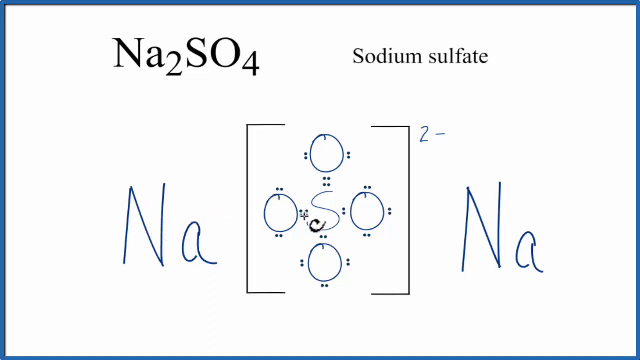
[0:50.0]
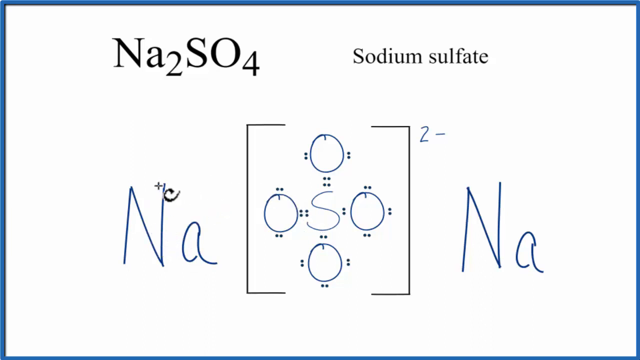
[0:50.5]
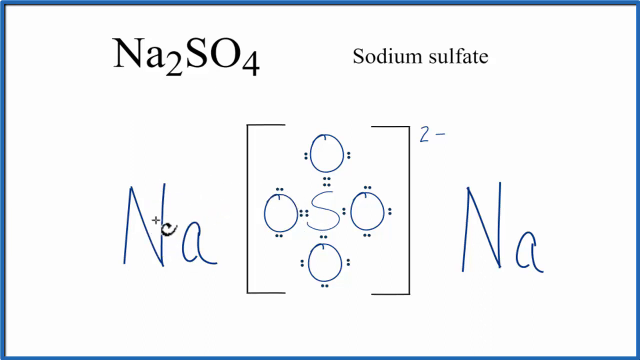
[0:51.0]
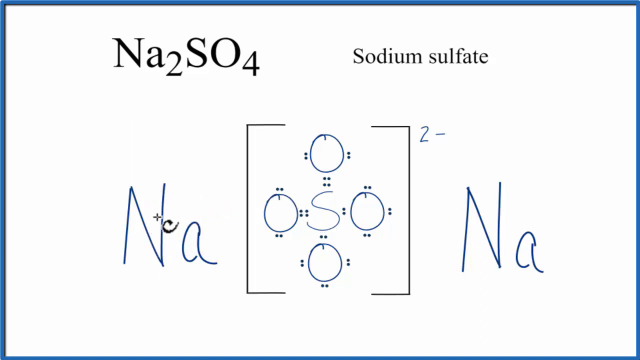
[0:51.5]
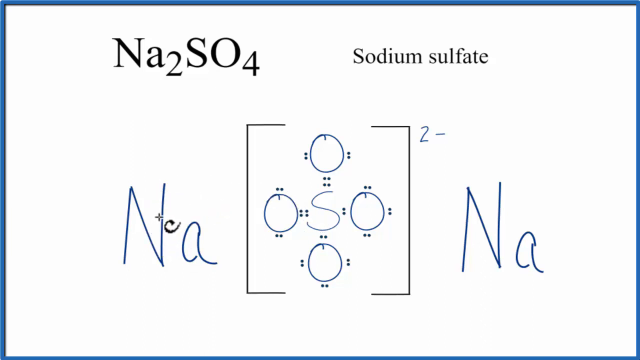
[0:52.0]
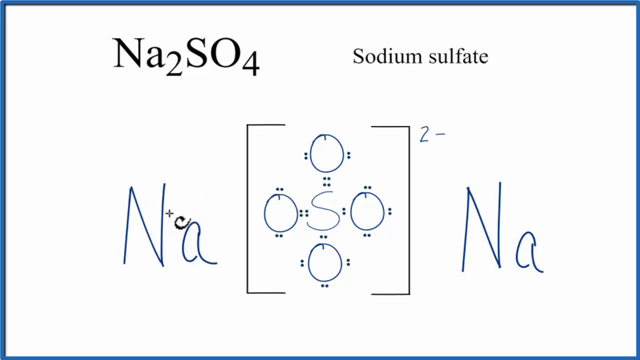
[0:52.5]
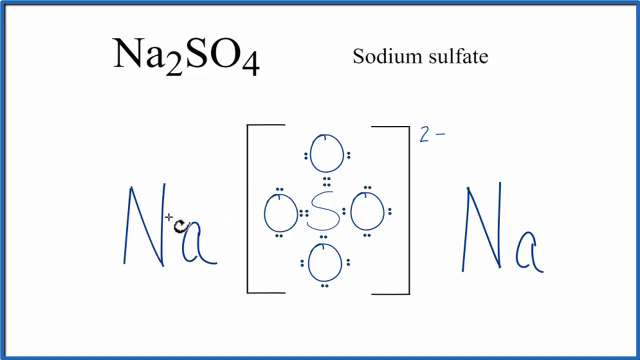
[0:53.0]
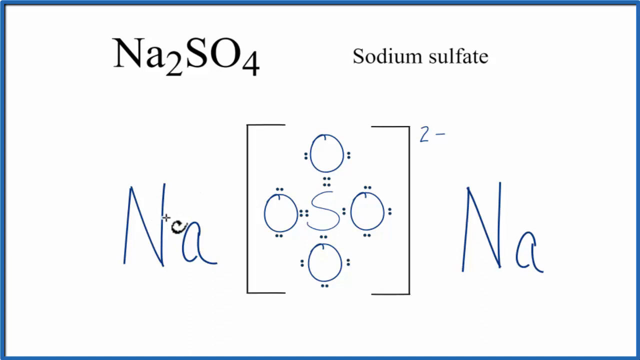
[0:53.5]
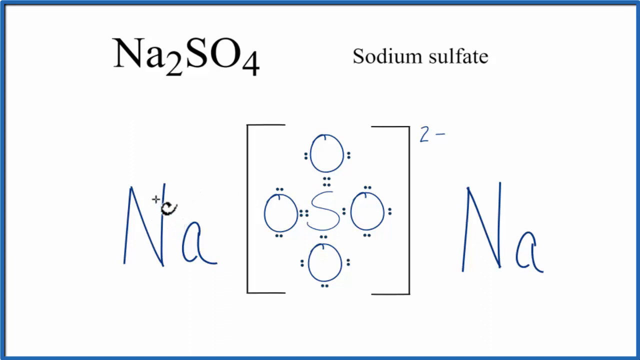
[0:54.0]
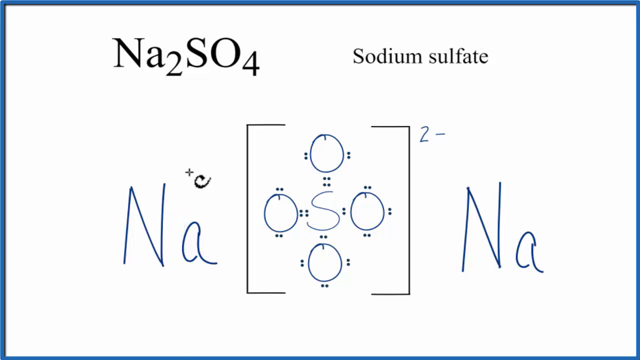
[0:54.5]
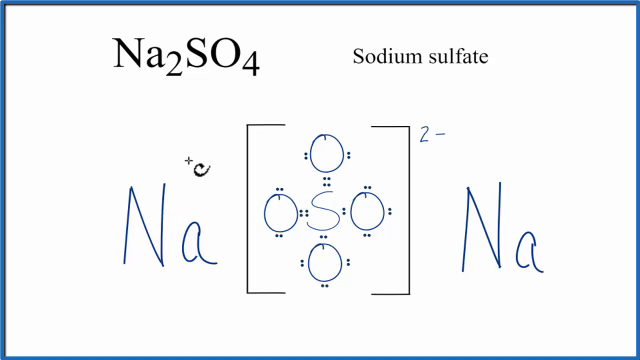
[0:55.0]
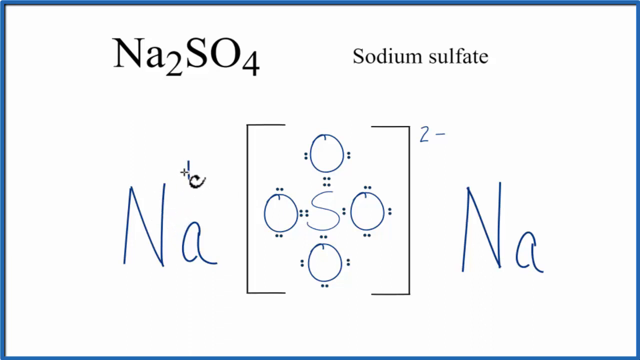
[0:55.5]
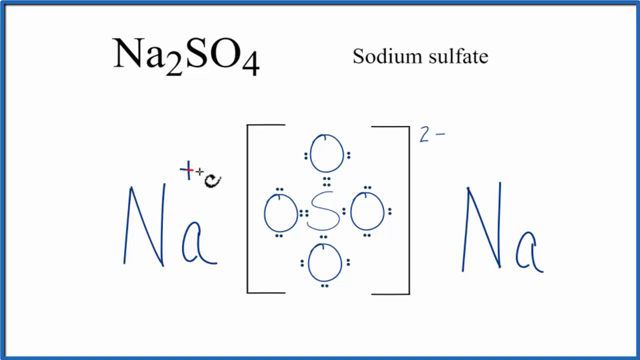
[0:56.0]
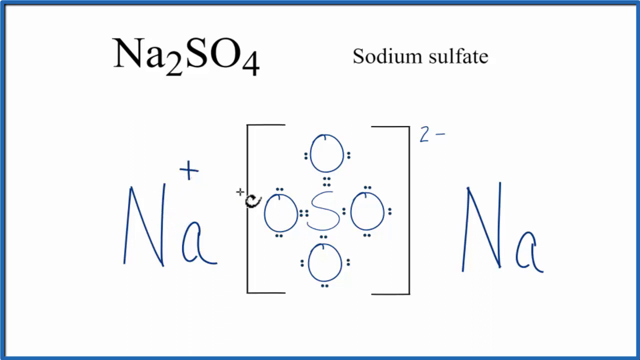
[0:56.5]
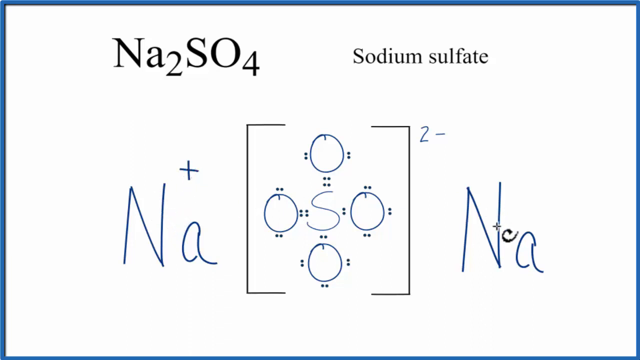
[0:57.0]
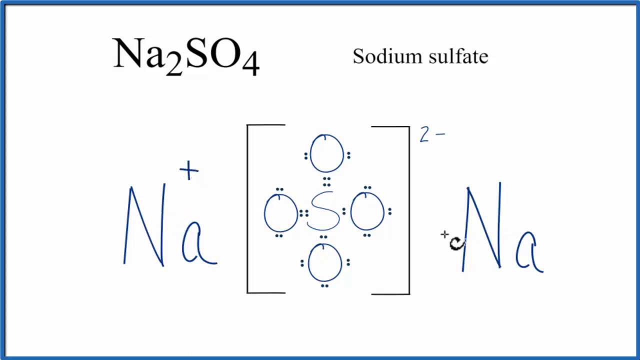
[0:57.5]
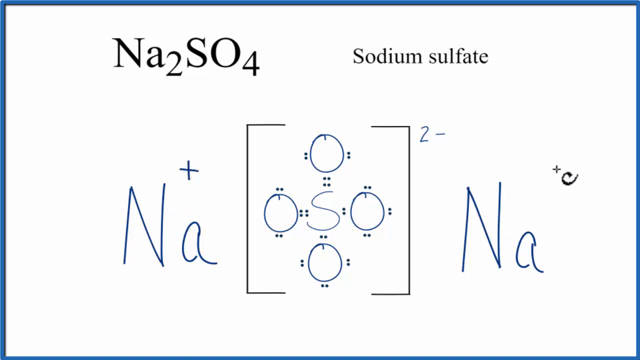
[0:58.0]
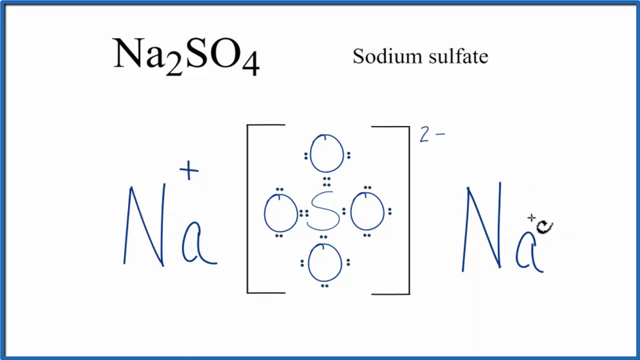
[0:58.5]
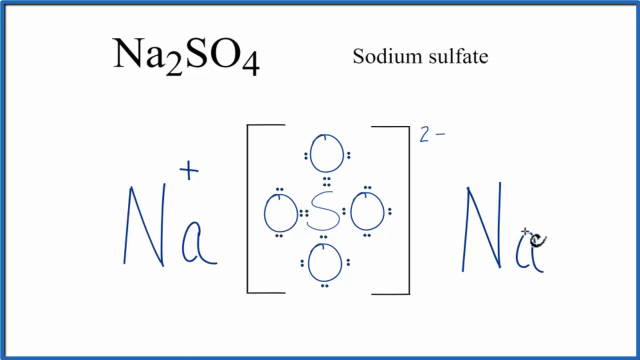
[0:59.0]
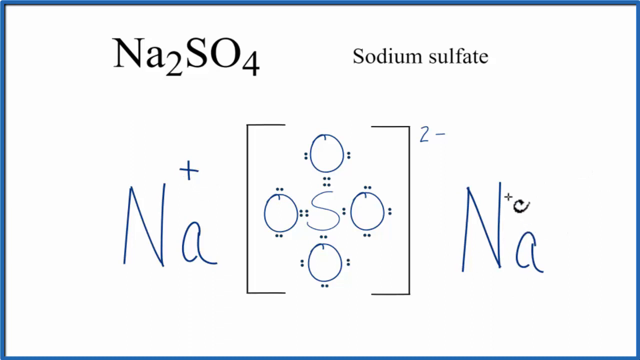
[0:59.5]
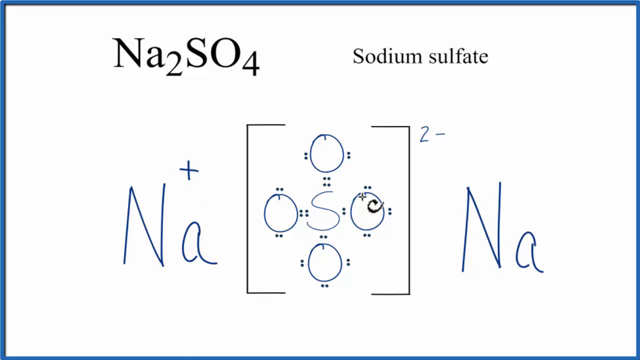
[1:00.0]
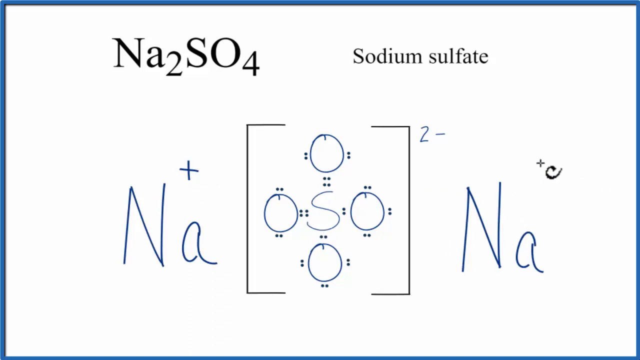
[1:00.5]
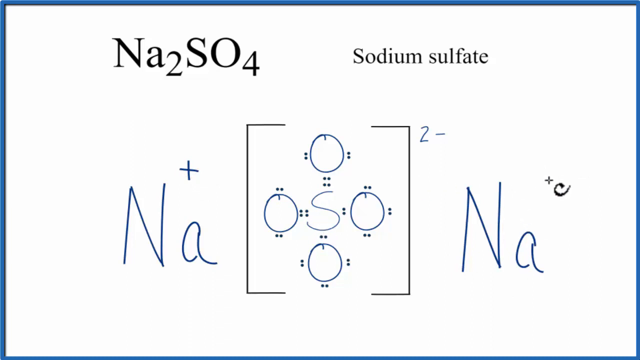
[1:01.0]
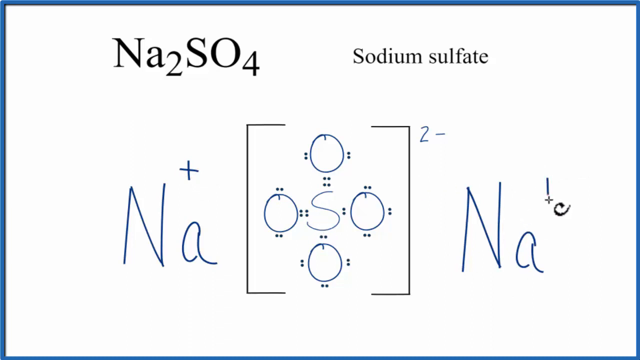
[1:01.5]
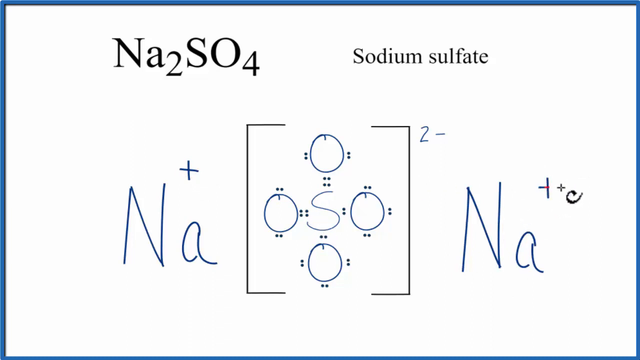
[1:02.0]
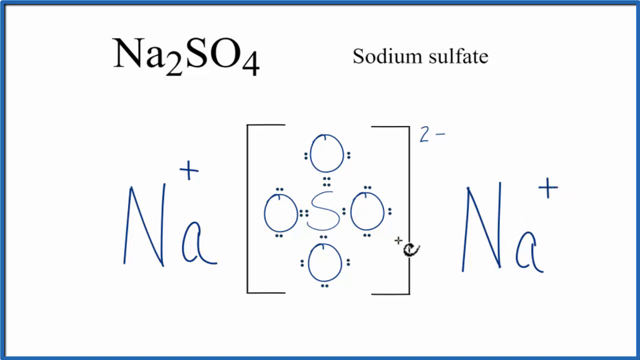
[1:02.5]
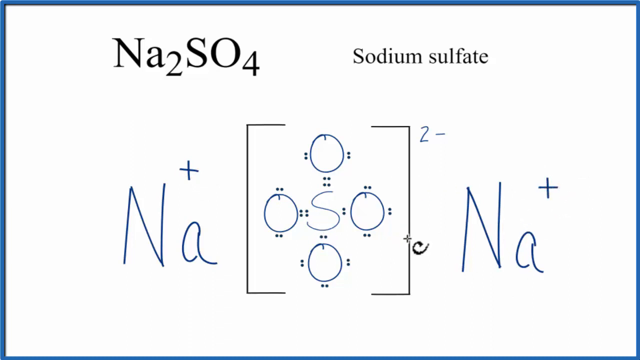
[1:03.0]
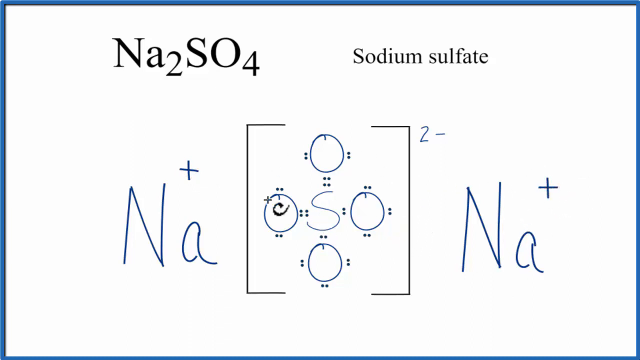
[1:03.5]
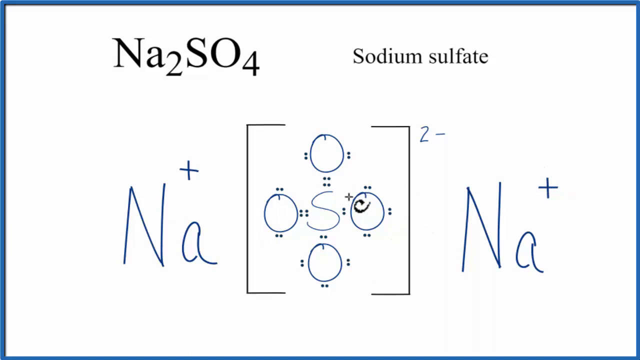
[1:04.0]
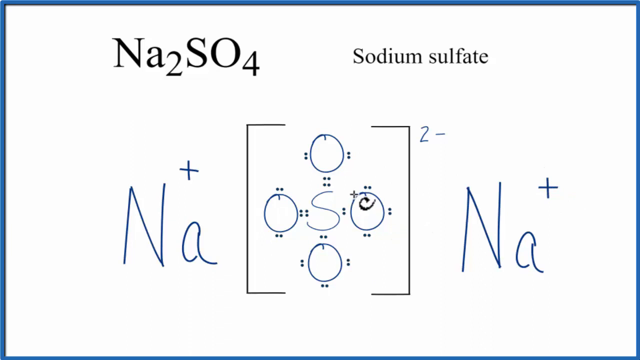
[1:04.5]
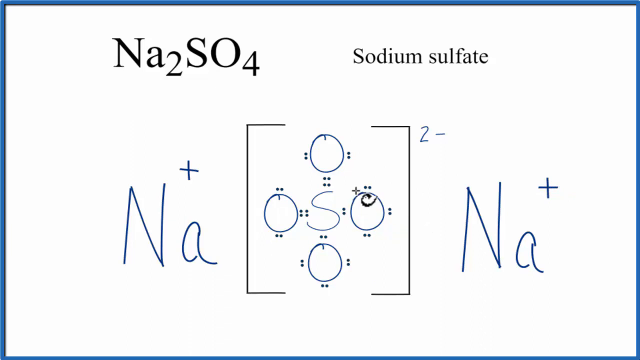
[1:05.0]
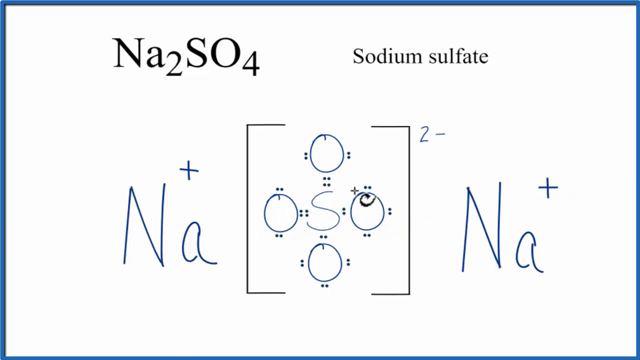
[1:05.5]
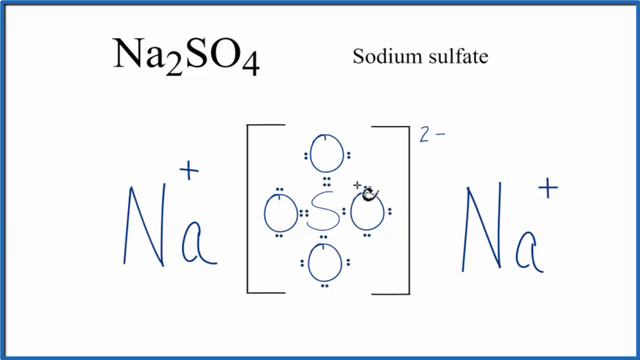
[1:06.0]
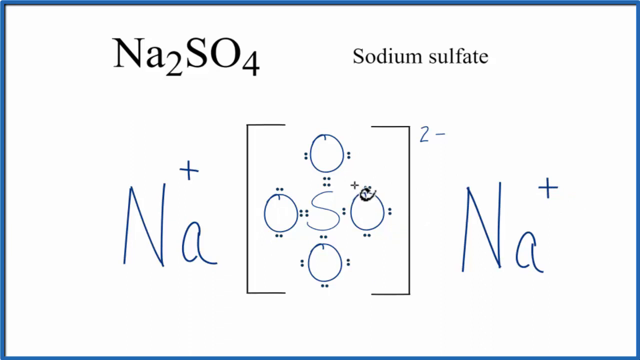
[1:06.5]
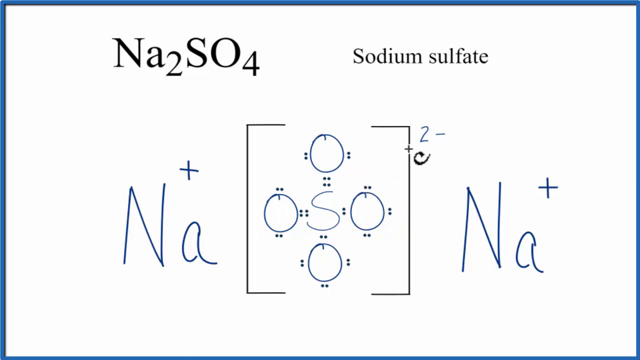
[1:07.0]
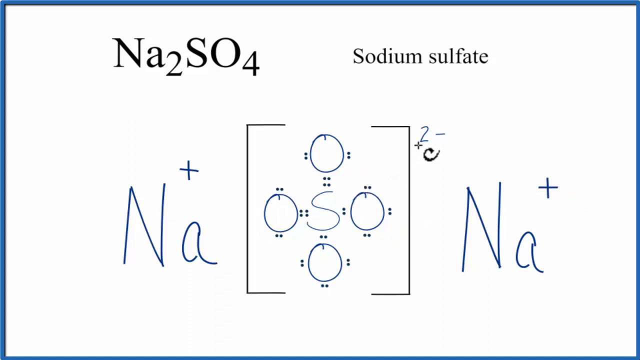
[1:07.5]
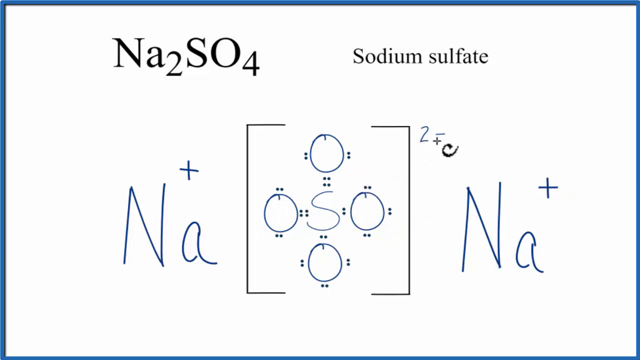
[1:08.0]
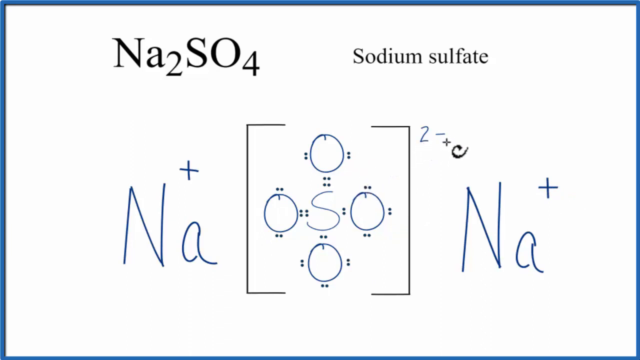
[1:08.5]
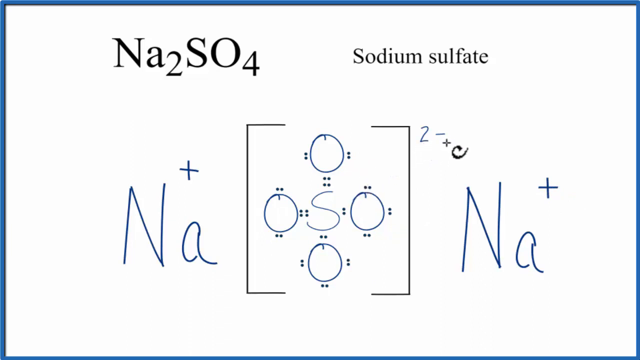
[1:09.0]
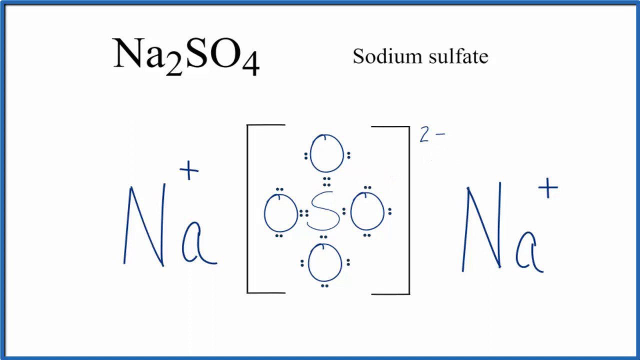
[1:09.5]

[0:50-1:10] The presenter draws positive charges on both Na ions, in the same blue as the Na ions. The text below has disappeared, while the Lewis diagram is still there. The drawing seems to be done with a mouse rather than a pen, since the cross-shaped cursor seems to follow the writing.